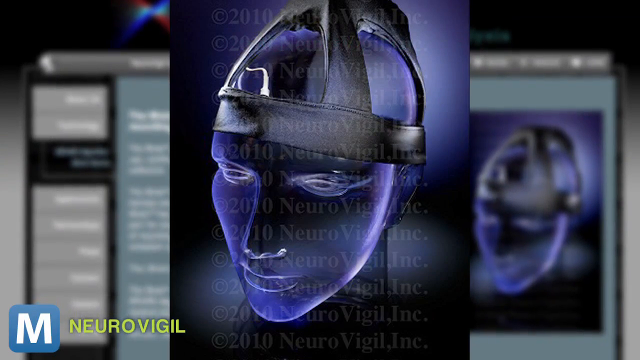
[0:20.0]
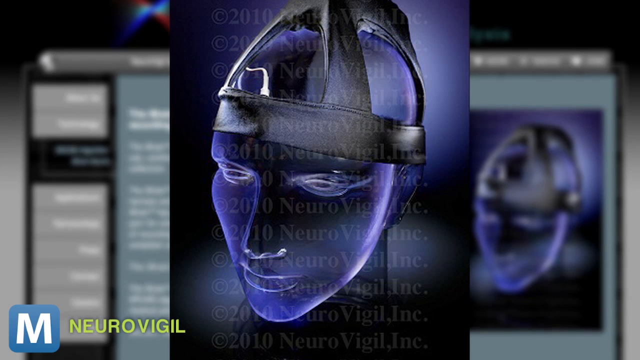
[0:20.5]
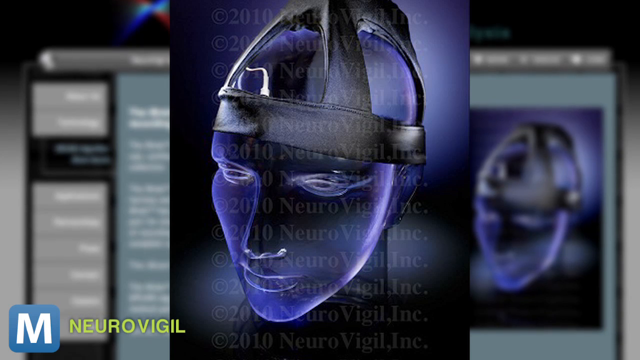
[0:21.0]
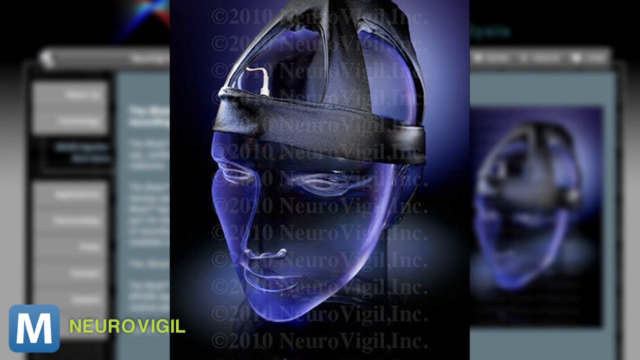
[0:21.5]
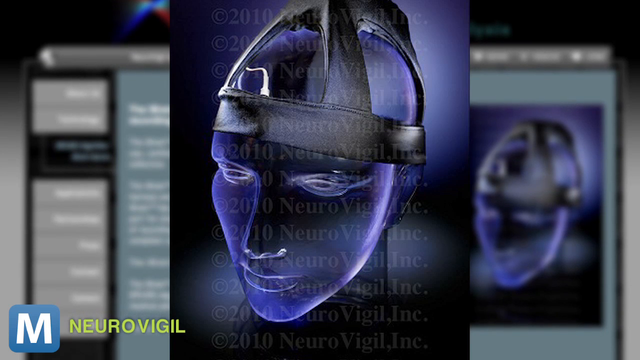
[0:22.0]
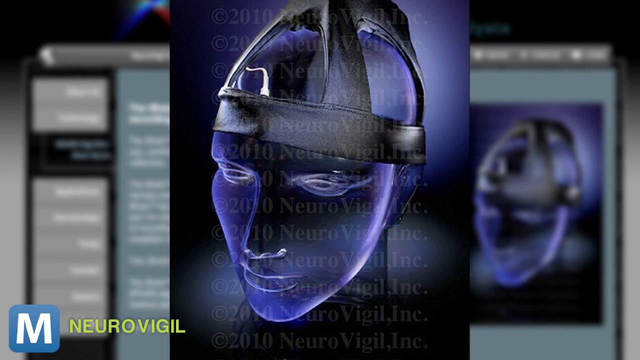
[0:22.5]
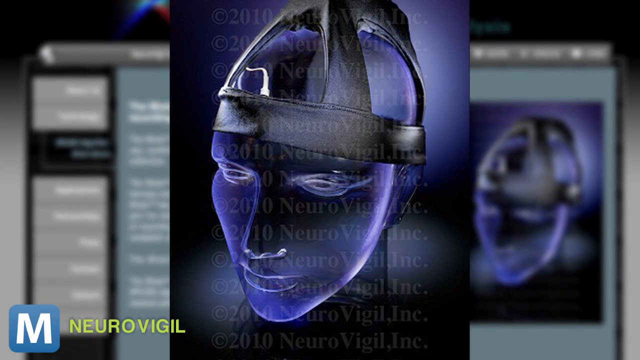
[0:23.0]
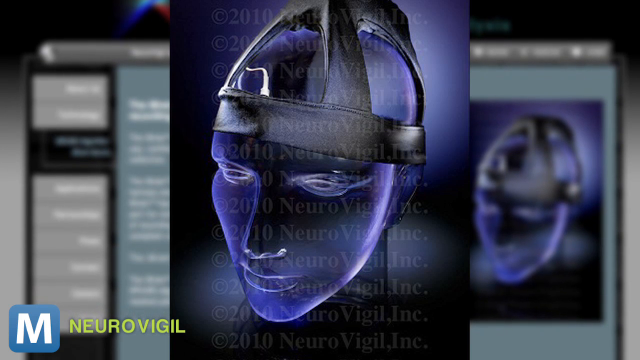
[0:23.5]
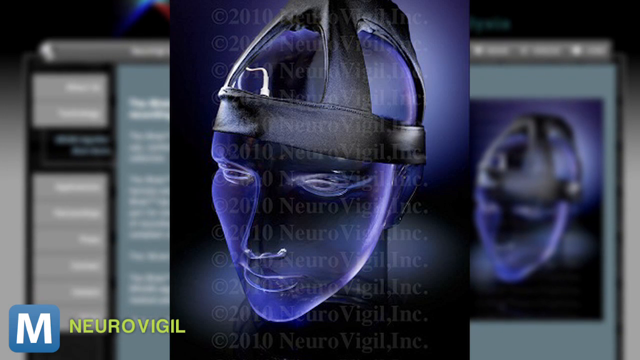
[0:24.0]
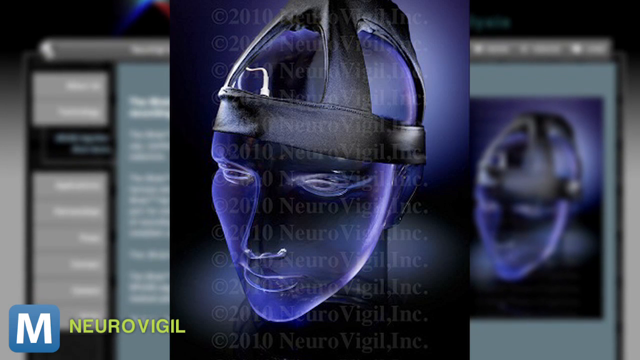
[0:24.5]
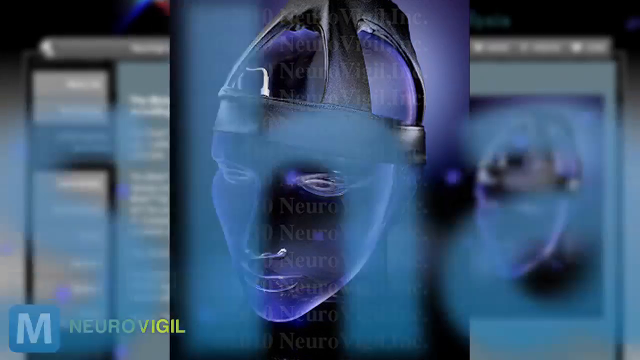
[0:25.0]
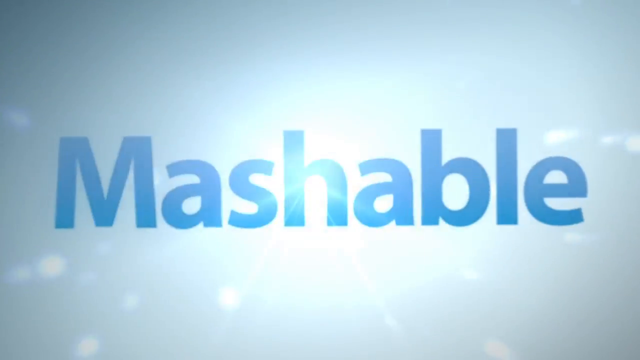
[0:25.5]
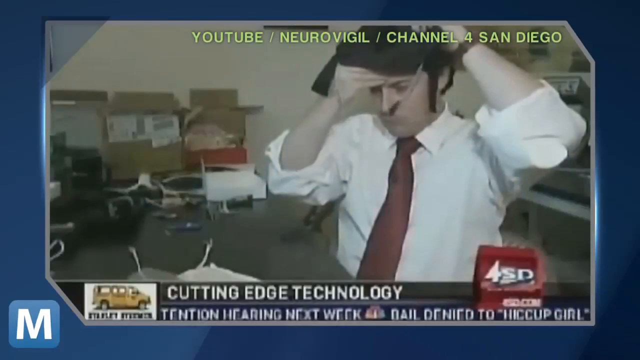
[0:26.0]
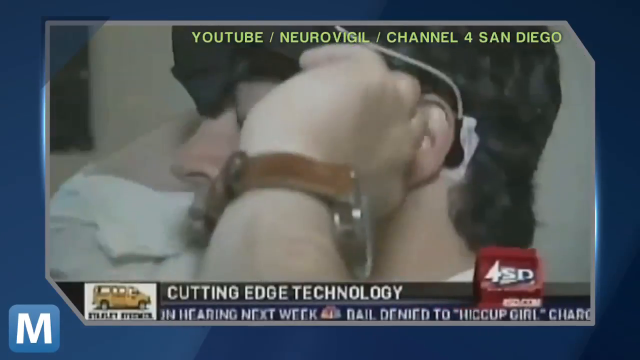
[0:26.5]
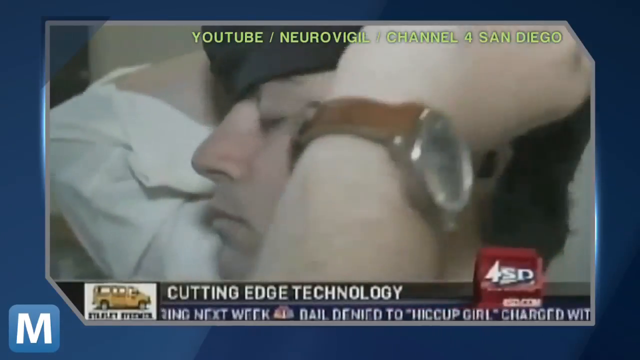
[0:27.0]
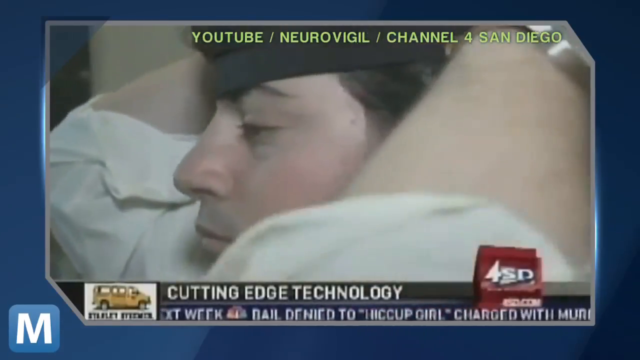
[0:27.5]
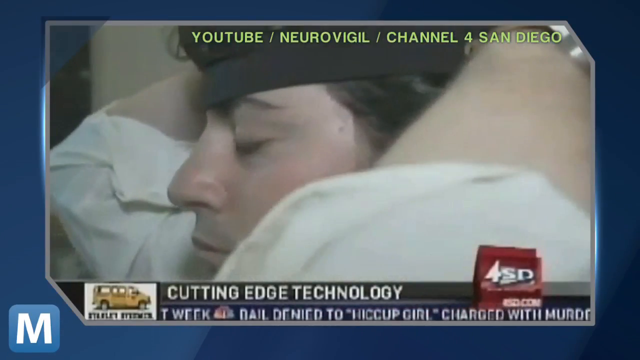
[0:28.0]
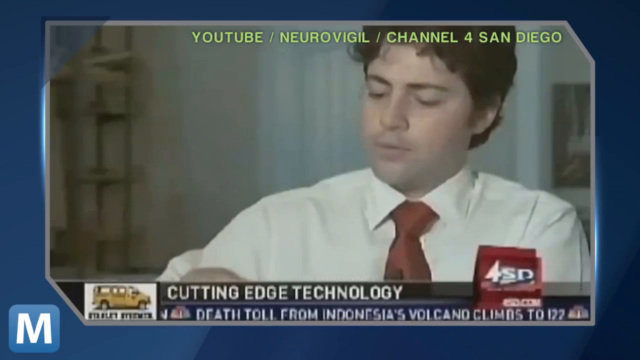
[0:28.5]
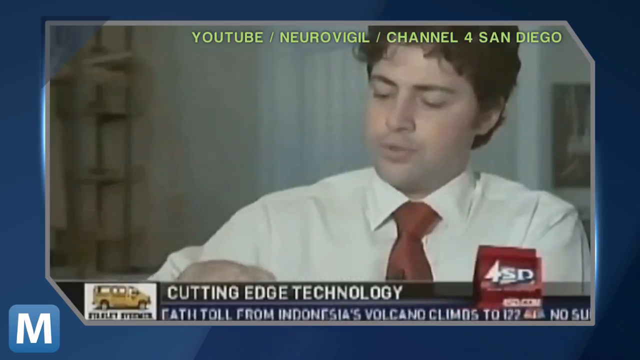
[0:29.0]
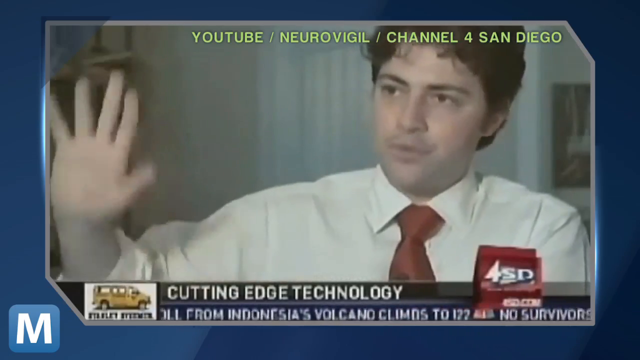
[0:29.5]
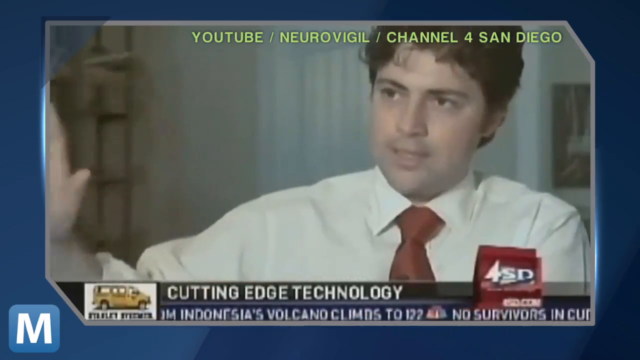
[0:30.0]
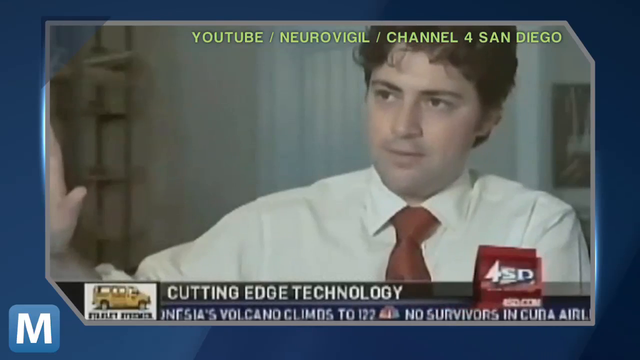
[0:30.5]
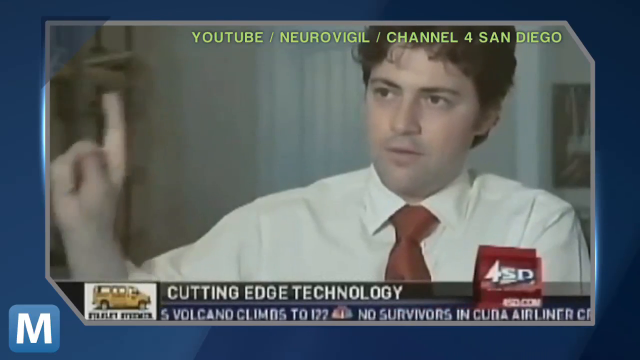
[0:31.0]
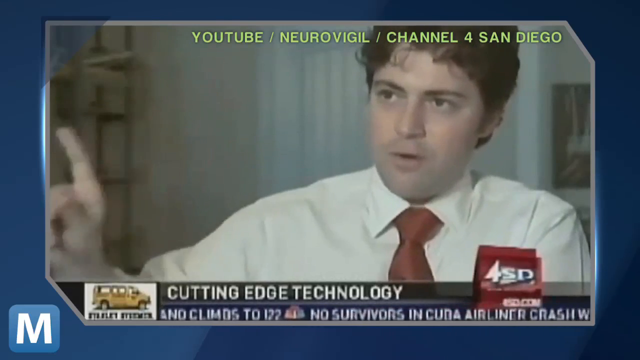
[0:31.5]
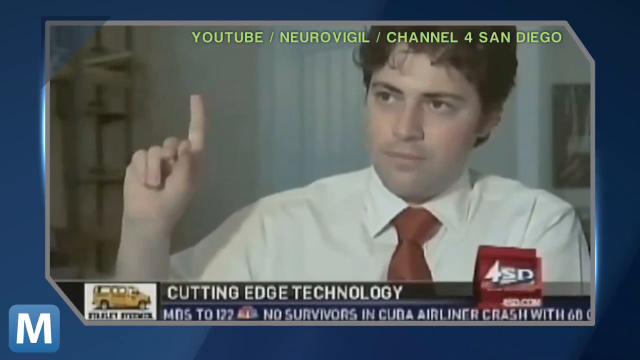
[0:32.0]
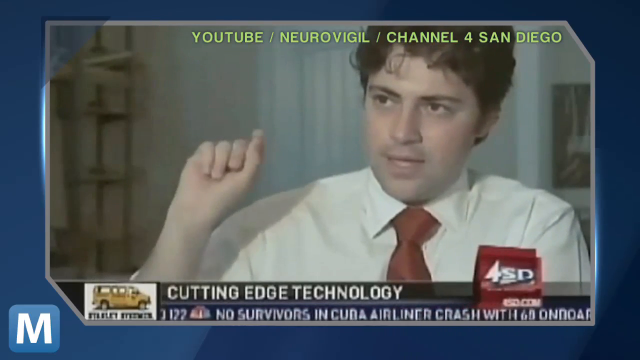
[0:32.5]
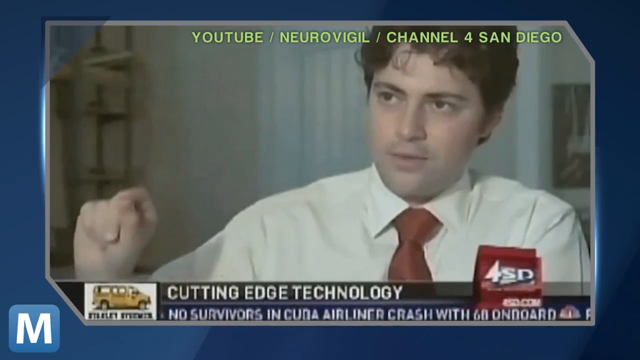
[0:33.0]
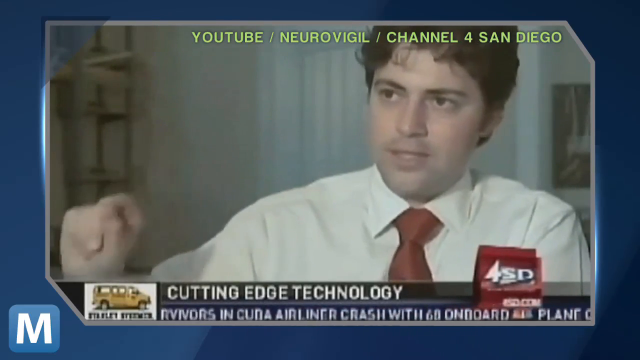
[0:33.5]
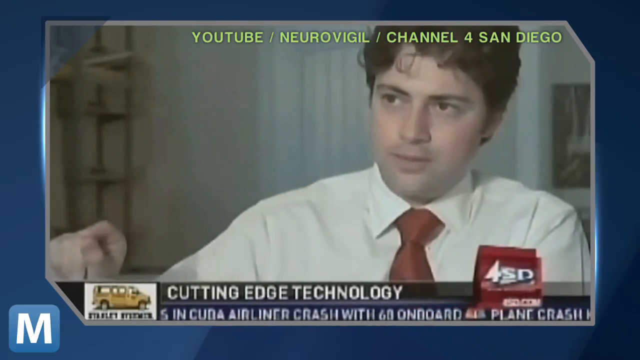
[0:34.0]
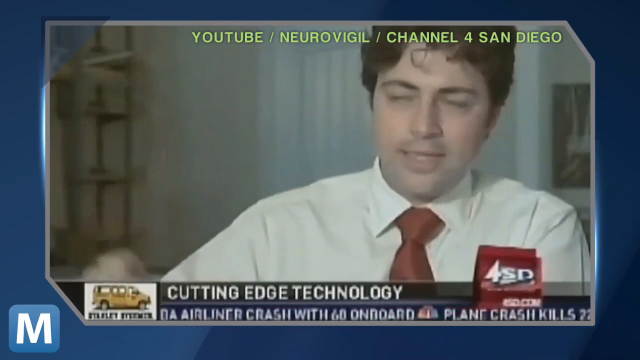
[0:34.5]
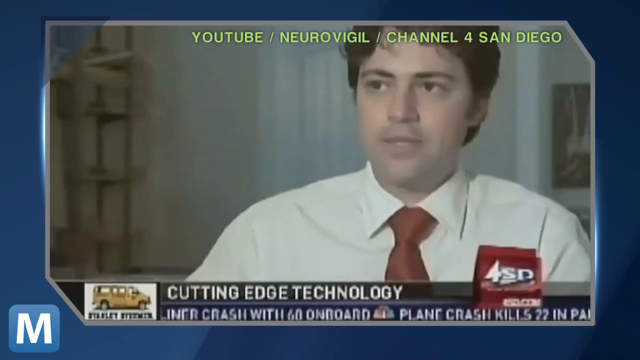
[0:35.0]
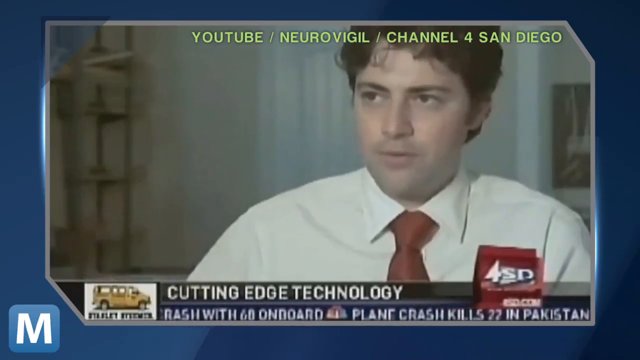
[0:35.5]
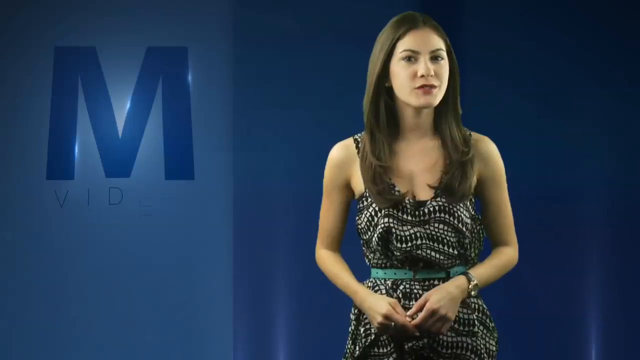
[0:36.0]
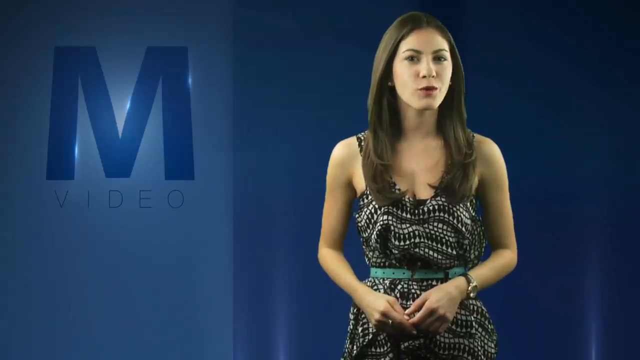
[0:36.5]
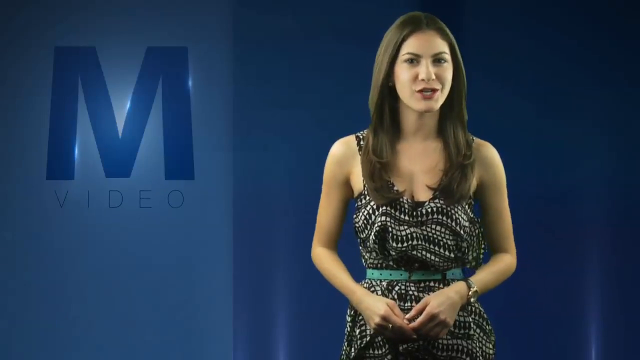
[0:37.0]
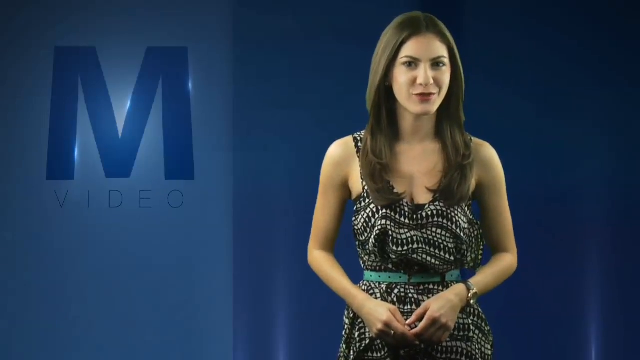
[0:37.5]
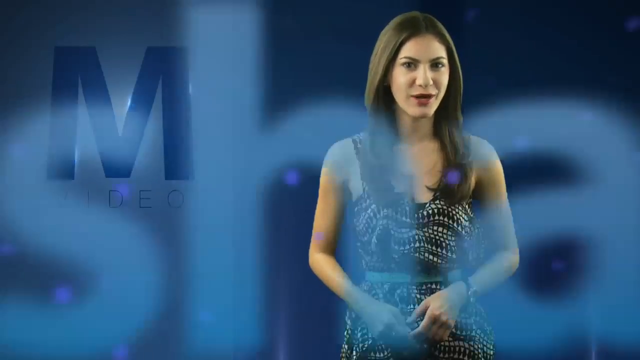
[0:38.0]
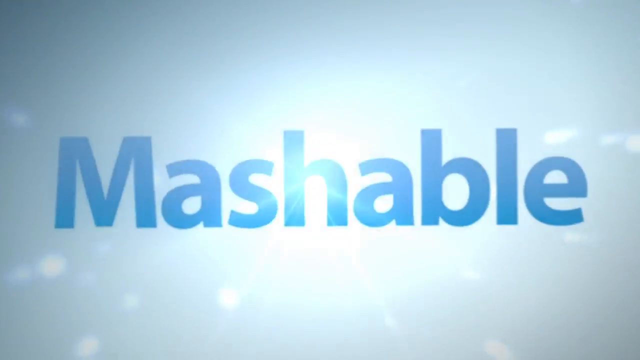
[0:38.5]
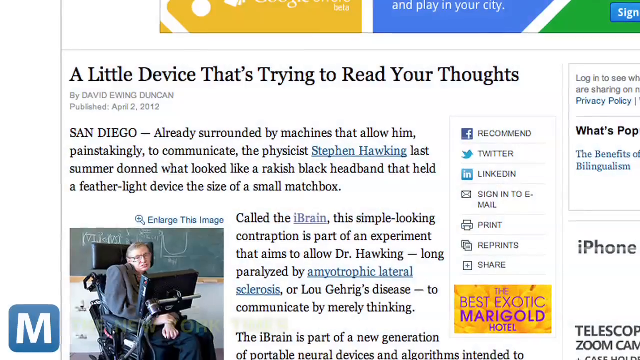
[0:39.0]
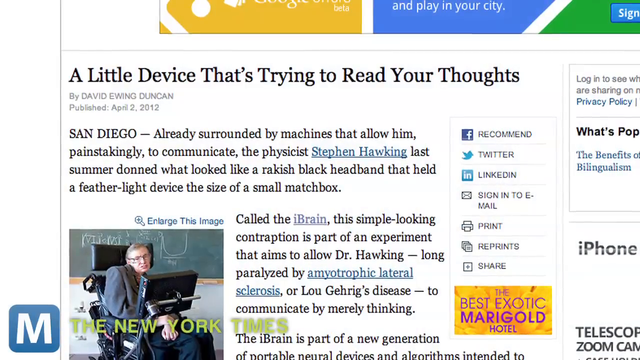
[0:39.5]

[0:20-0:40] An image shows a digitally generated blue head wearing a black strapped hat with a white cord attached to it. After five seconds the screen turns to a bright blue background and the word "Mashable" flashes in the middle. It then cuts to a news clip with yellow text in the upper right-hand corner reading "YouTube NeuroVigil Channel 4 San Diego" and a news chyron at the bottom reading "Cutting Edge Technology." A reporter in a white button-up shirt and a red tie tries on one of the leather strap hats. A brief shot shows him using his hands to wrap it around his head, followed by a shot of him from the shoulders up speaking to the camera. He gestures to the right with his right hand, and as he speaks, looking slightly to the viewer's left, he makes pointing gestures with his right pointer finger. The video cuts back to the woman standing in front of the blue background, this time with no name chyron at the bottom of the screen. She speaks into the camera for less than two seconds before another flash of the Mashable logo: a bright blue background with a darker blue "Mashable" in bold font flashing into the middle of the screen. The video then transitions to a scrolling image of a news article titled "A Little Device That's Trying to Read Your Thoughts."